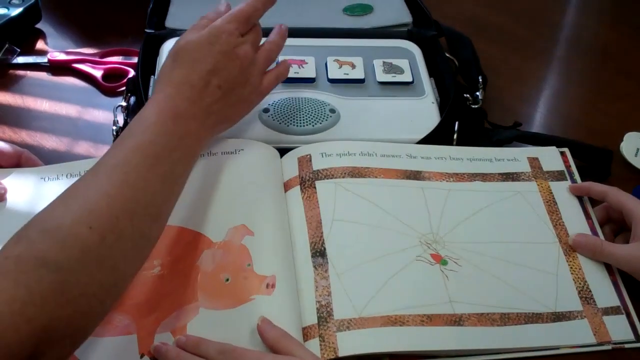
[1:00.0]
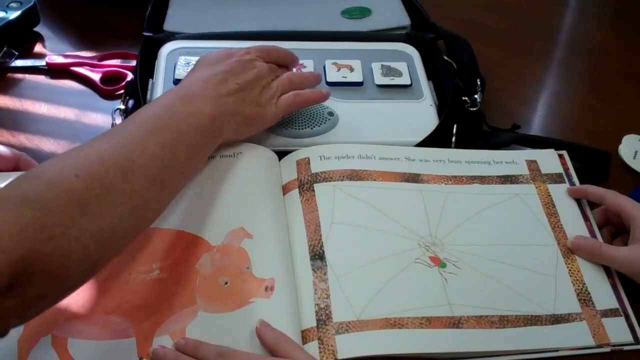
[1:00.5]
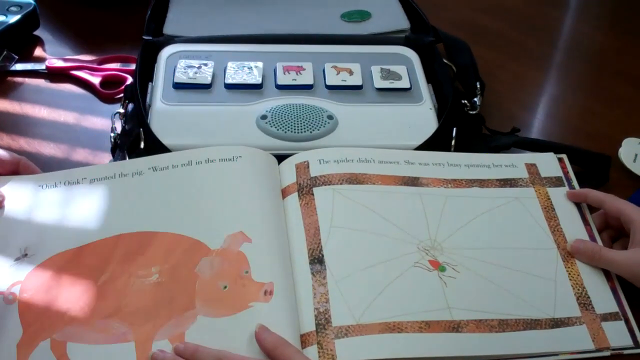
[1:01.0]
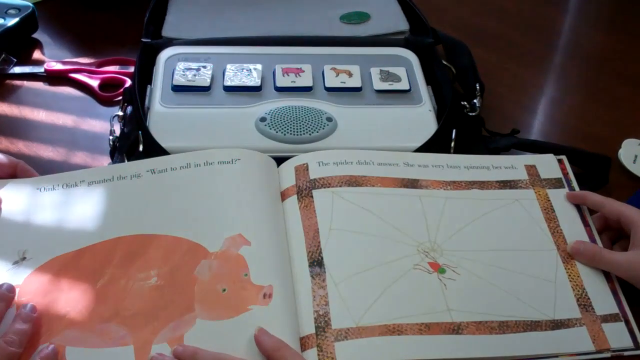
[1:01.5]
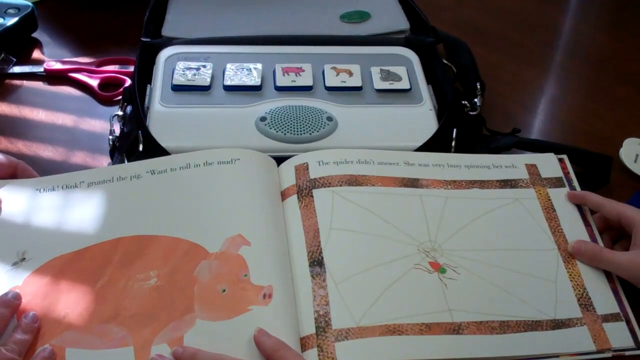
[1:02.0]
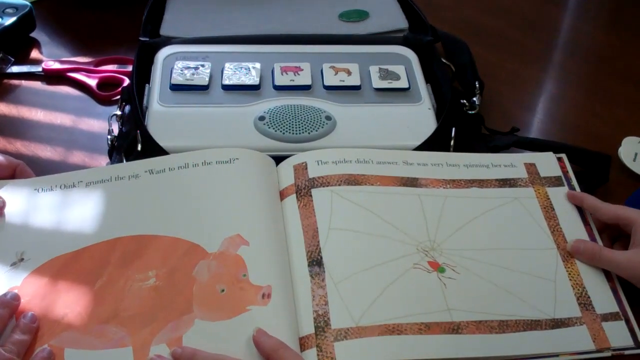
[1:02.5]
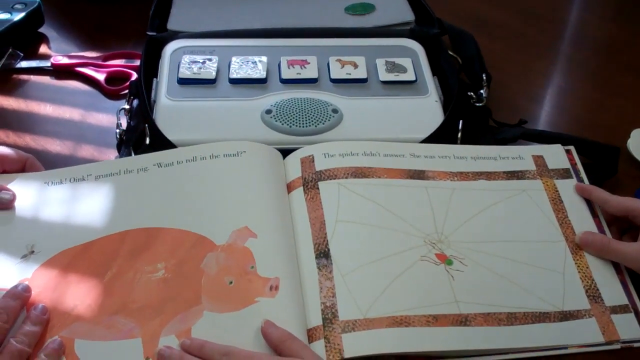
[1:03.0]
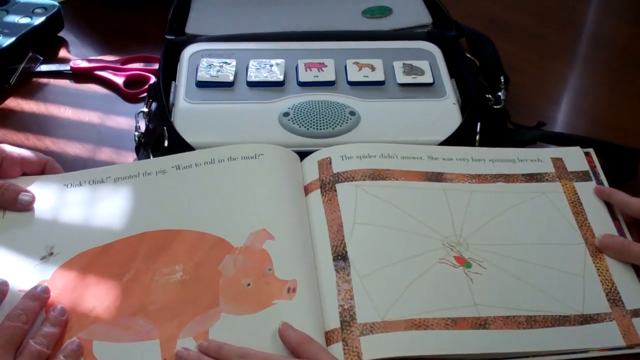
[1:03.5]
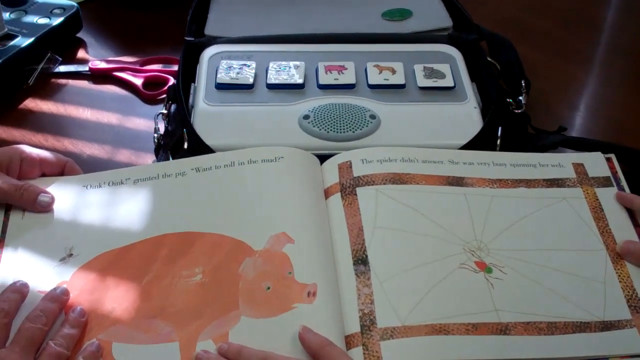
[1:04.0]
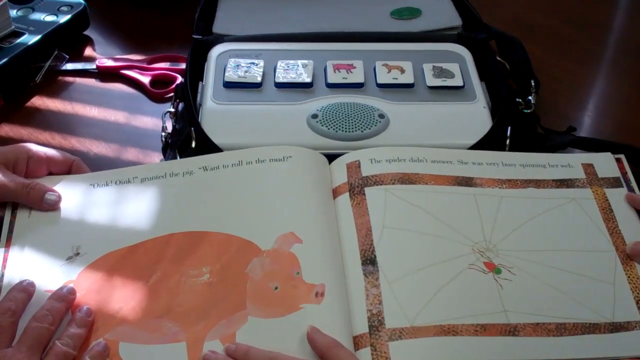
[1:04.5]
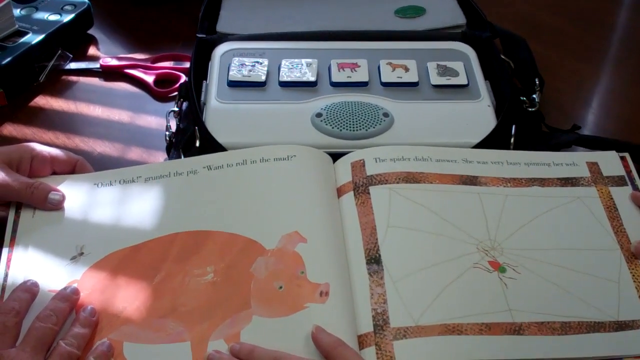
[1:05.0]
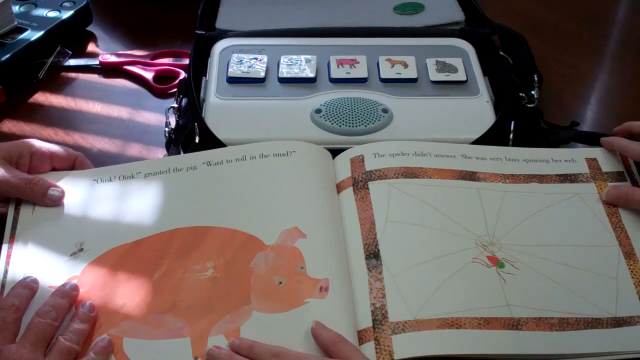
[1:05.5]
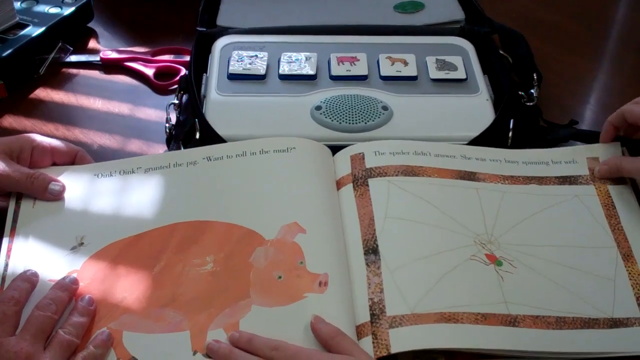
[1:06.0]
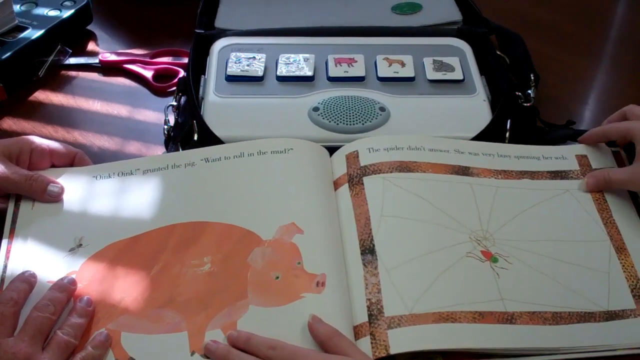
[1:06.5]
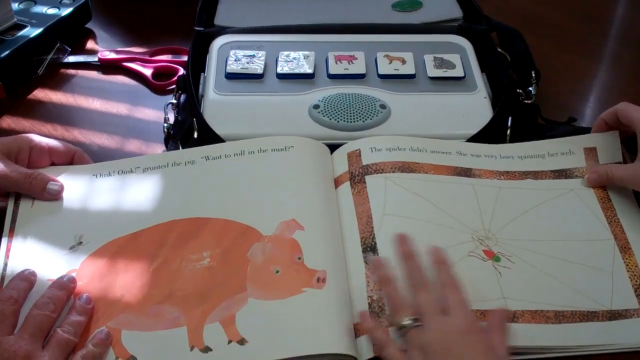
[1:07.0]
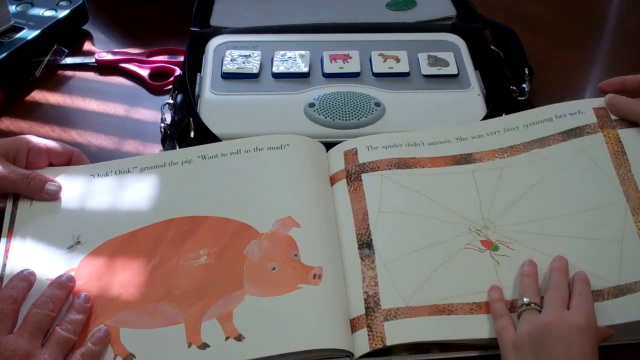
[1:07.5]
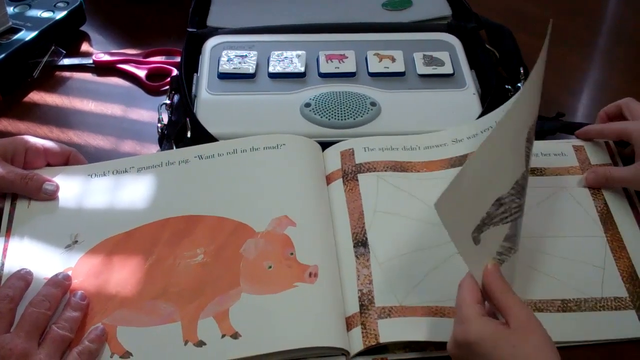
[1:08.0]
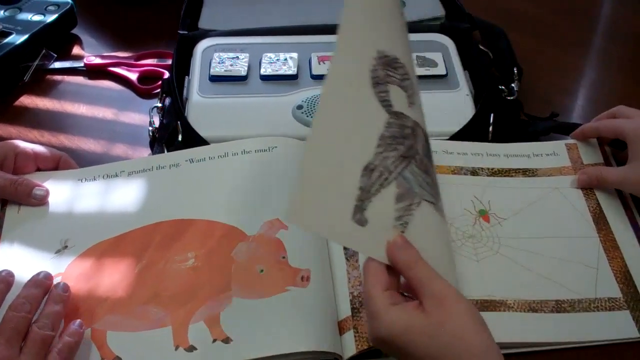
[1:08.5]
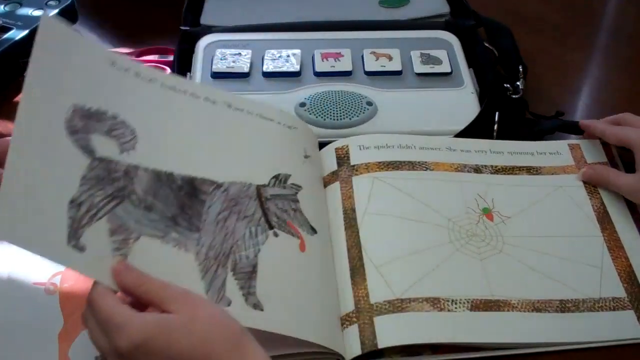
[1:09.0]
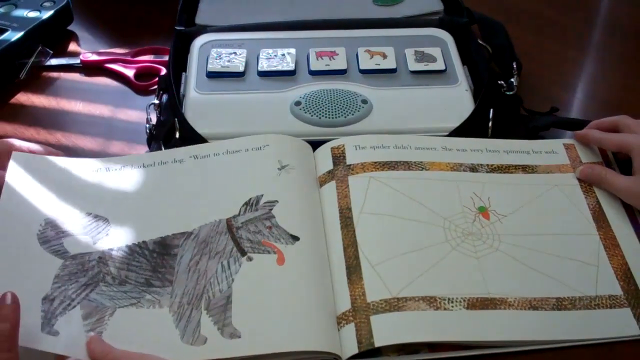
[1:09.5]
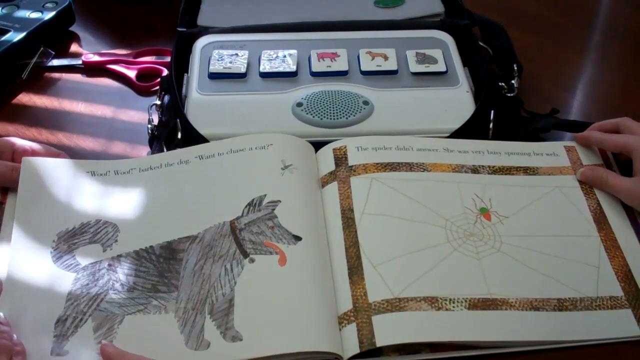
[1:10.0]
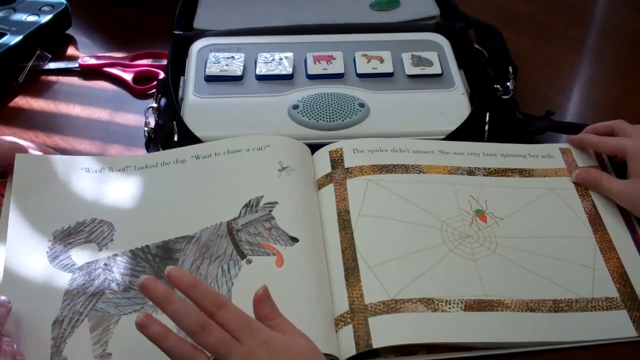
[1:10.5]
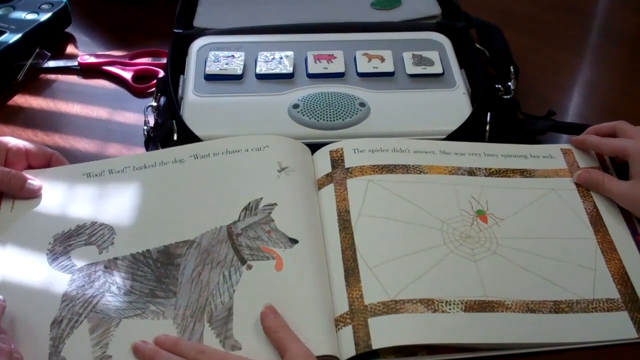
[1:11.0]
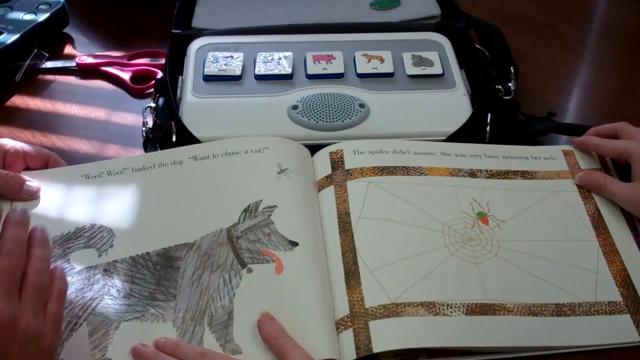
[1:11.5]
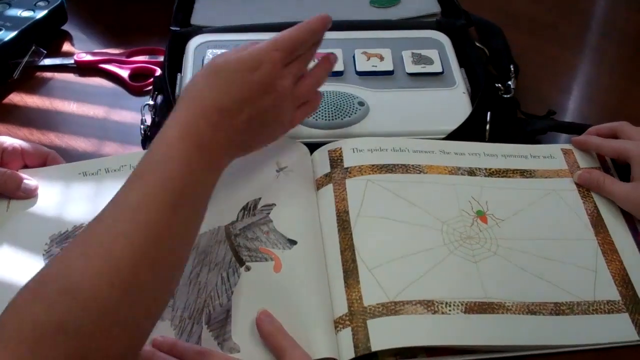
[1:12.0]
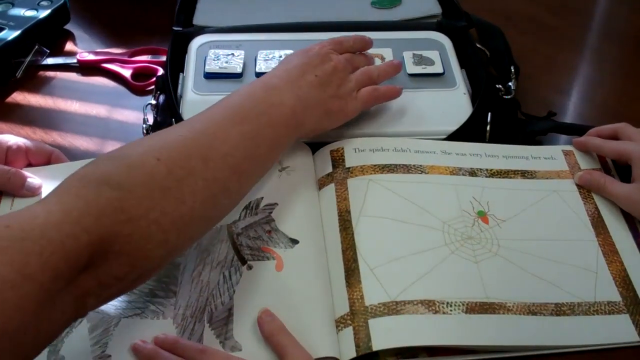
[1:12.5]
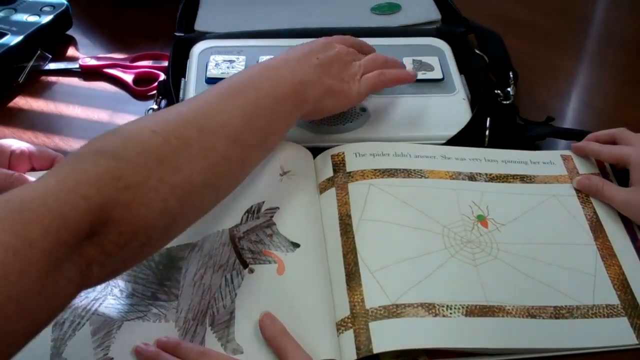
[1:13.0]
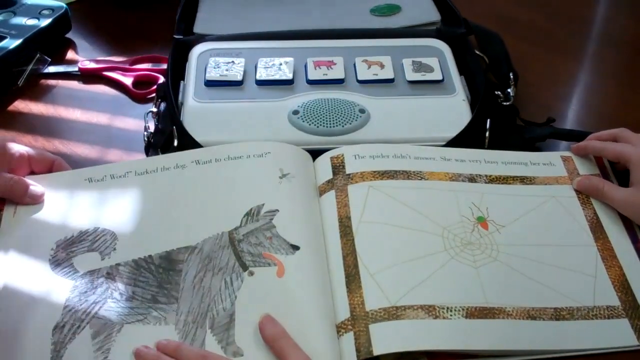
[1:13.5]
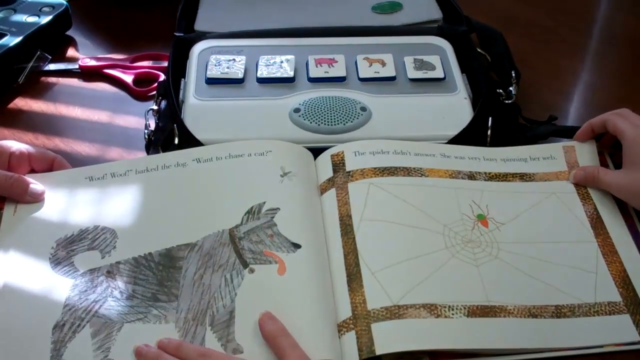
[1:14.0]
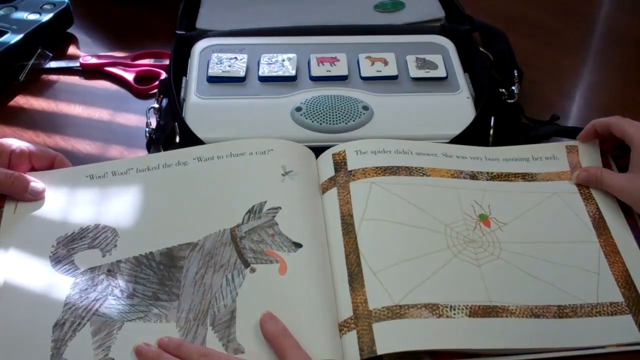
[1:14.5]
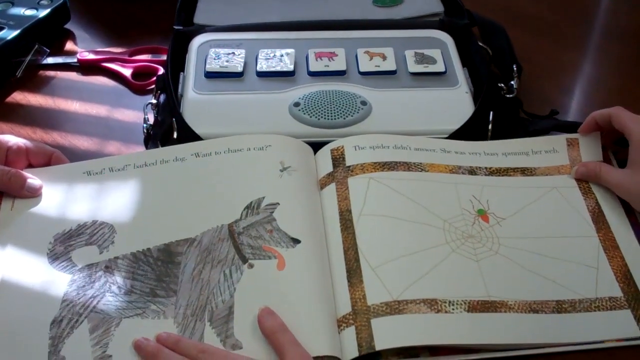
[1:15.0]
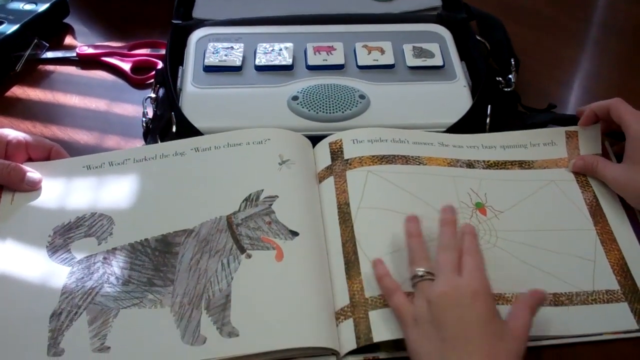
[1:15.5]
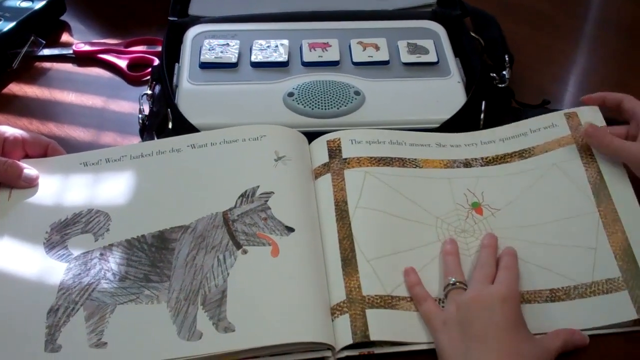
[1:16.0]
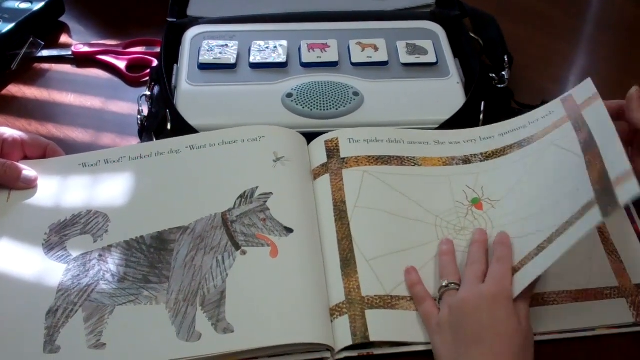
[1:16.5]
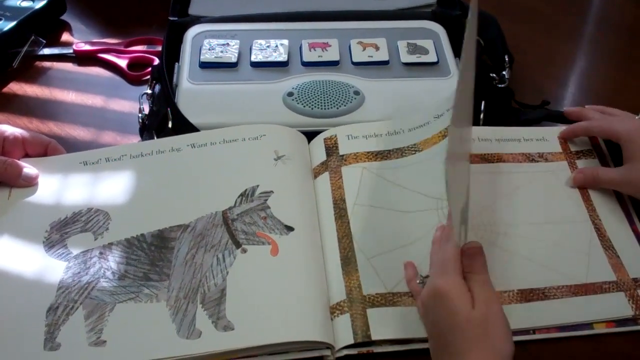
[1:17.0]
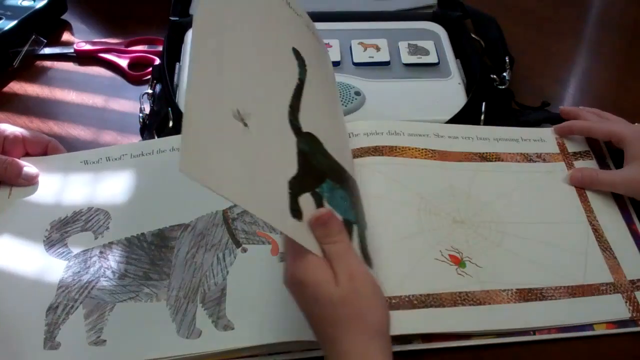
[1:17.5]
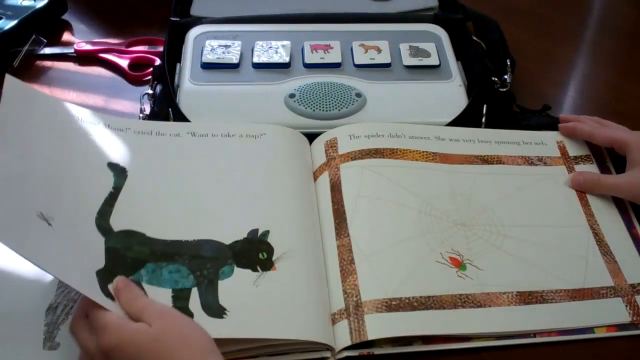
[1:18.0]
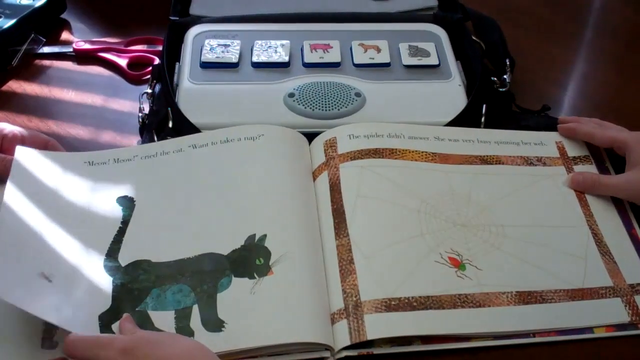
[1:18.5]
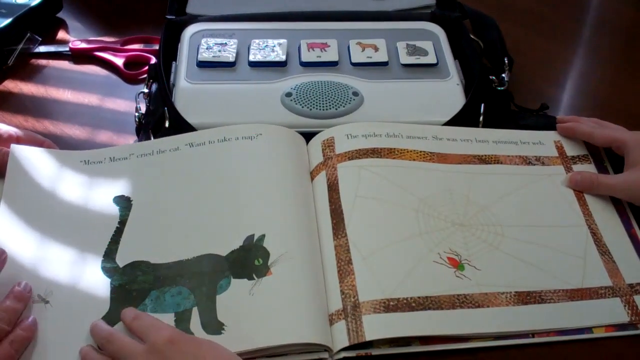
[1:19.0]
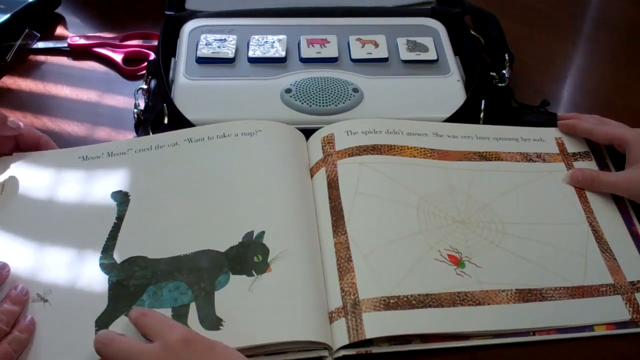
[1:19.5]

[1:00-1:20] The Eric Carle book lies open with a pig on the left-hand page and the text "oink, oink, said the pig, want to roll in the mud." The right-hand page shows a fence post with a spider in the middle of a nearly completed web, and the text "the spider didn't answer. She was very busy spinning her web." Somebody's right arm reaches across the page, and their hand taps the center image, a pig button on a console. The page turns to a dog, with the text "woof, woof, barked the dog, want to chase a cat." The arm reaches and presses the dog button. The right-hand side says "the spider didn't answer. She was very busy spinning her web." The page turns again to a cat on the left-hand side, with the text "meow, meow, cried the cat, want to take a nap."